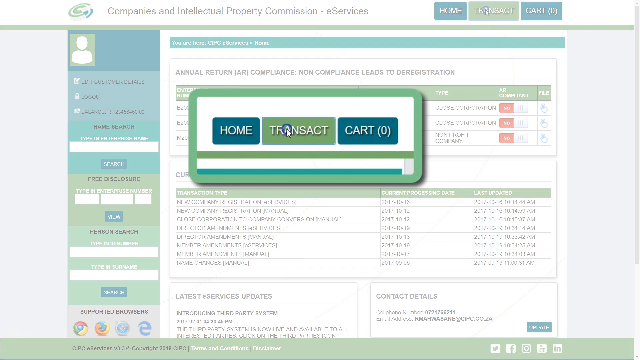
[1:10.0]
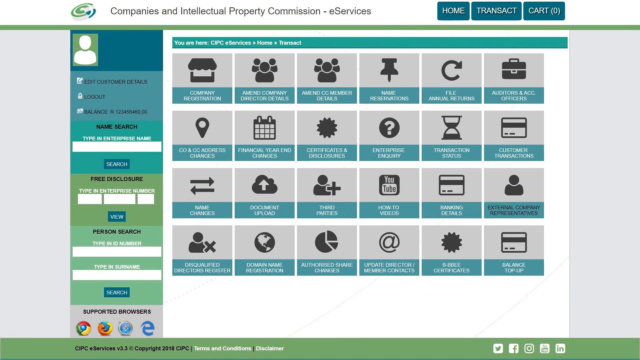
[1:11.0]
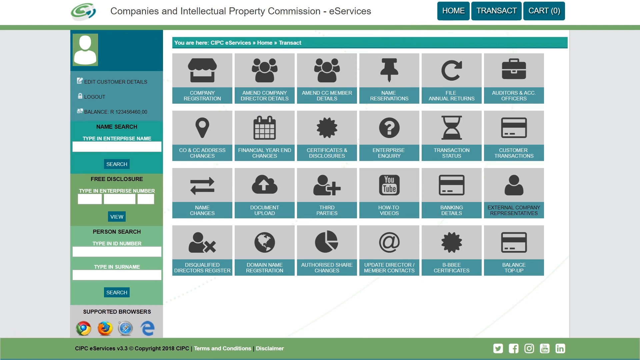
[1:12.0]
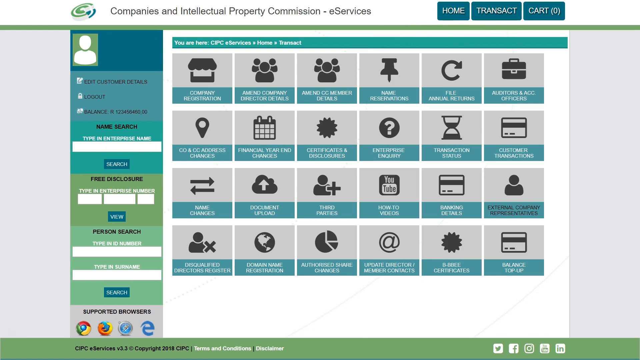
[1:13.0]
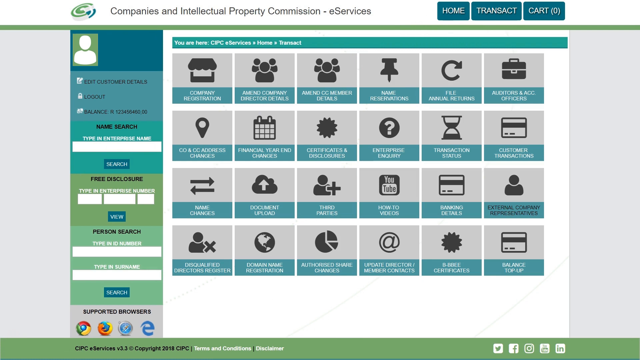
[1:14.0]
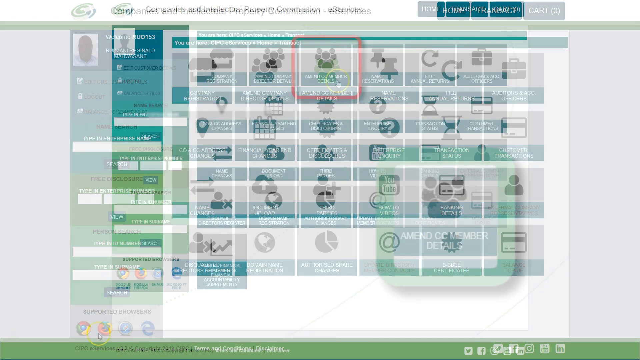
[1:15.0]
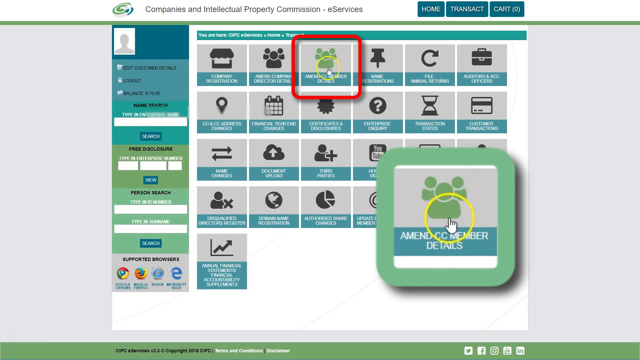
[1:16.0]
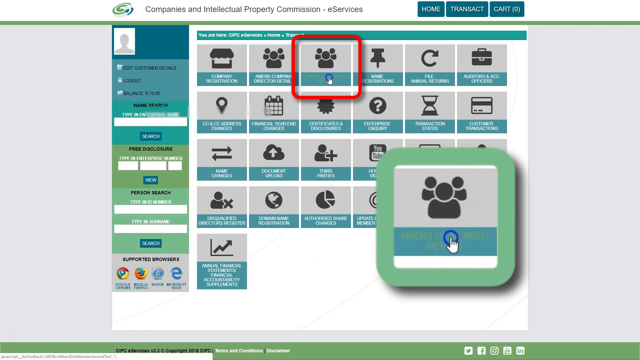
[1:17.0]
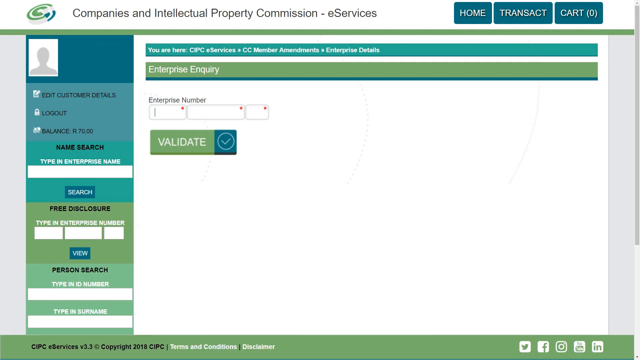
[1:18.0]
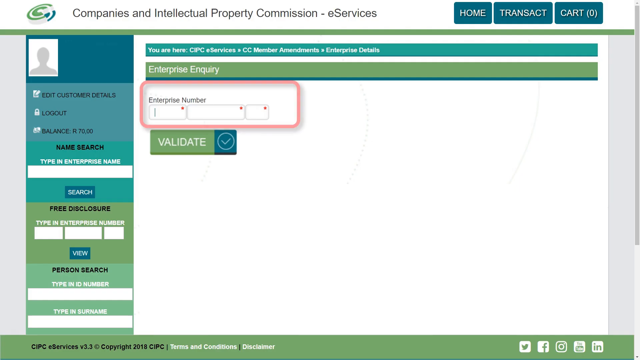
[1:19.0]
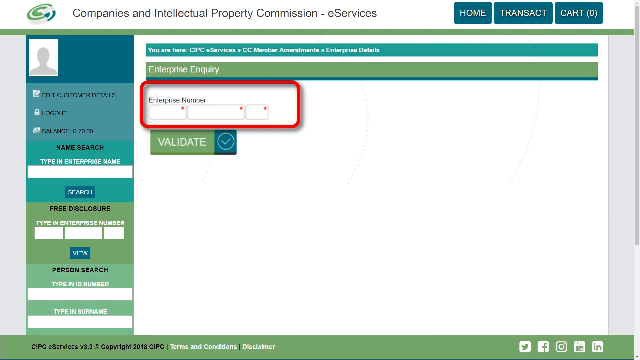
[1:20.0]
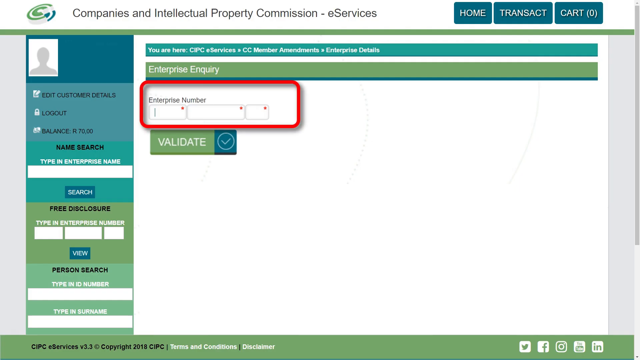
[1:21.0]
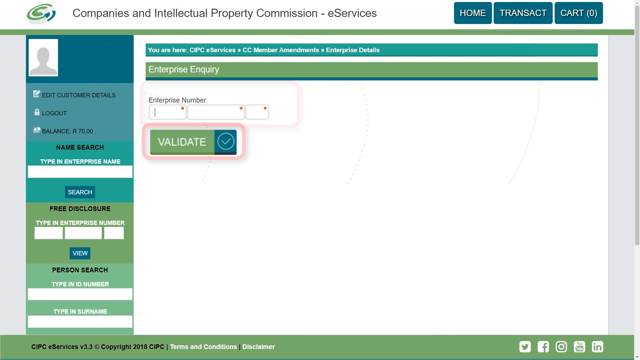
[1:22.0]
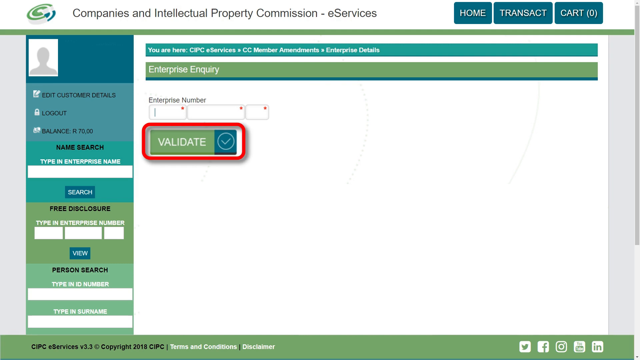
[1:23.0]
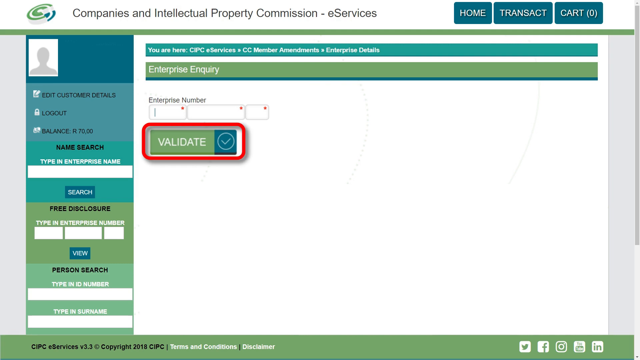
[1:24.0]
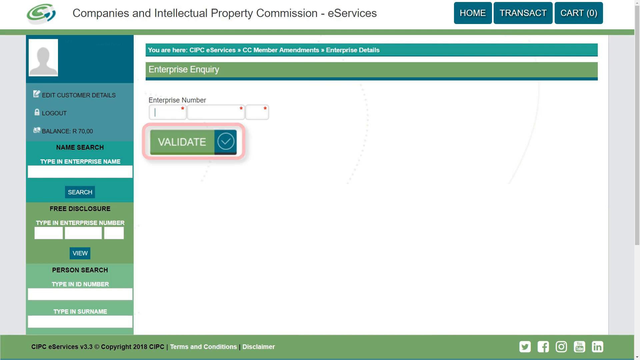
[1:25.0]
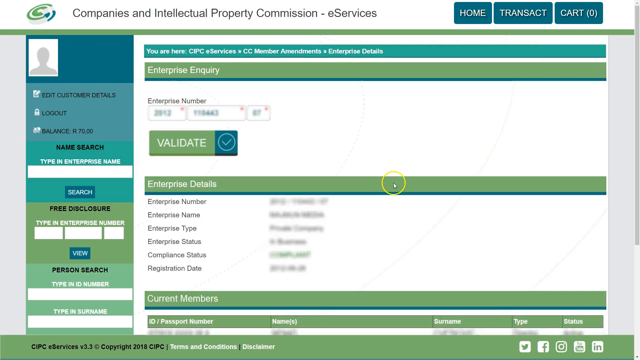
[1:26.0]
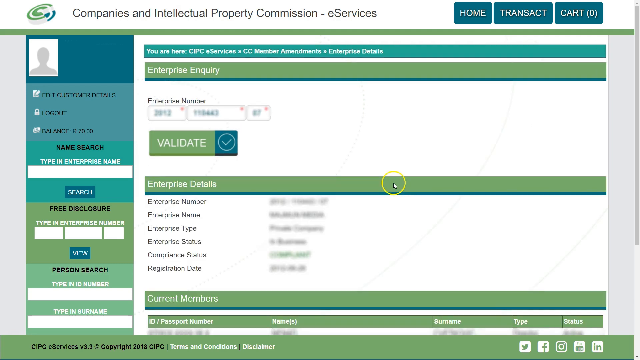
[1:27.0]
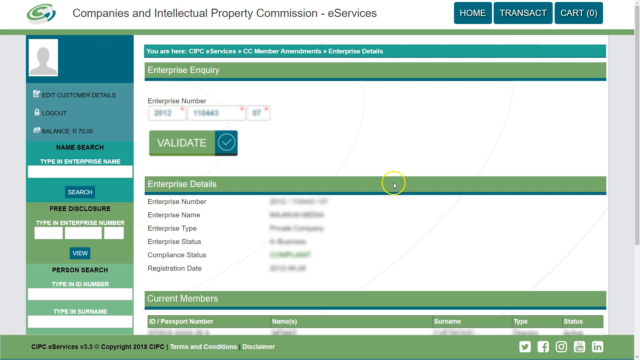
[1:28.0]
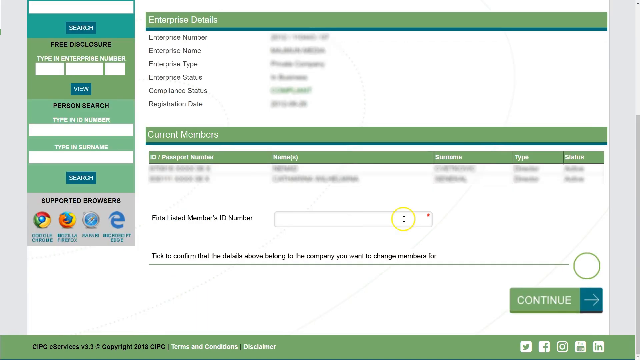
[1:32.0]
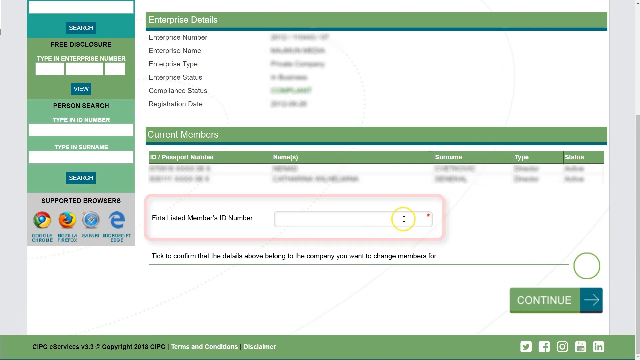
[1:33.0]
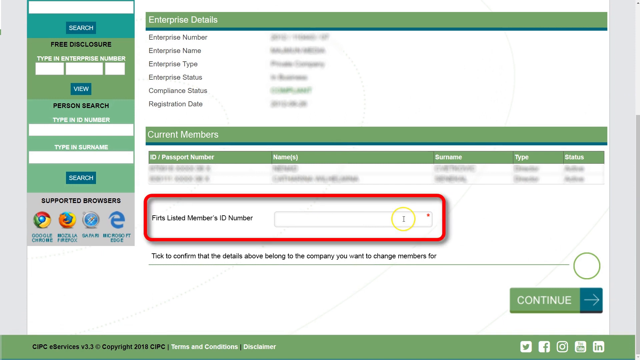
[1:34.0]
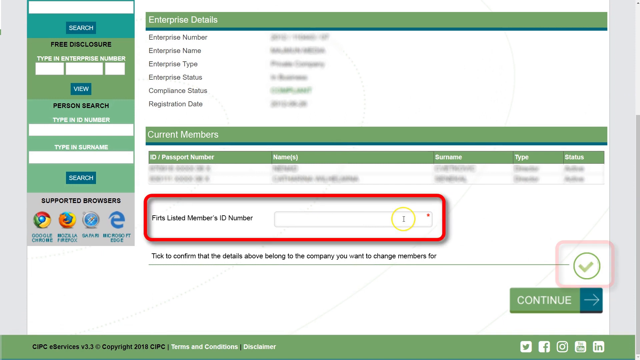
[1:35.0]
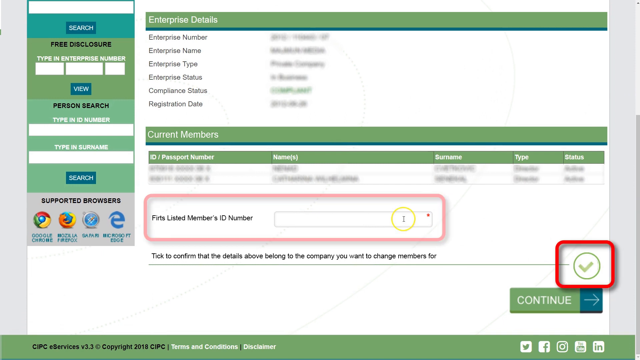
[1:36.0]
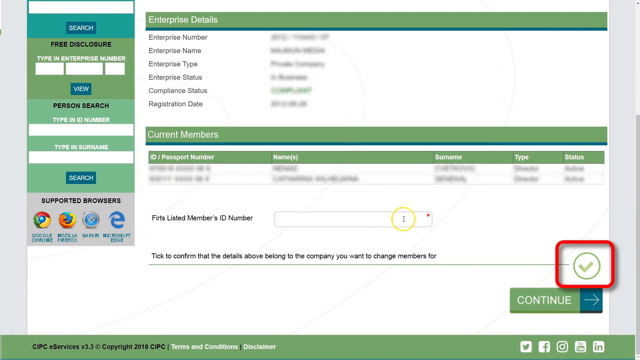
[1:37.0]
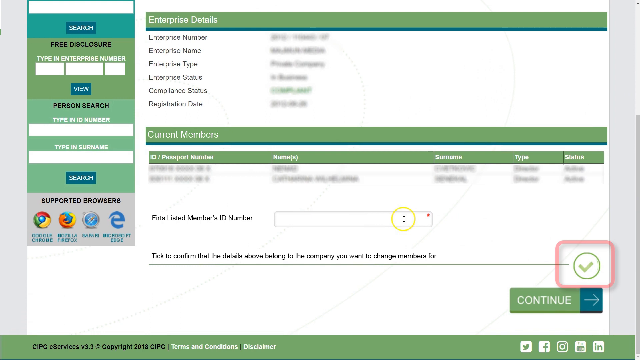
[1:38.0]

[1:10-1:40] A pop-up appears on a box. The screen then changes to many rows of black-and-white icons, with a description of them in a blue box underneath. One icon is boxed in red marker or red ink, and the page switches very quickly. Somebody controls the cursor, moving around and changing pages rapidly, and one of the icons is highlighted in red. That icon appears in a box in the lower right. The enterprise number is entered to validate it, and clicking validate makes the box outlined in red. The cursor then rests in the middle of a green bar, and then on the search bar where it says to list the member ID number; that bar has a red dot on it, apparently a reminder that it must be filled in.